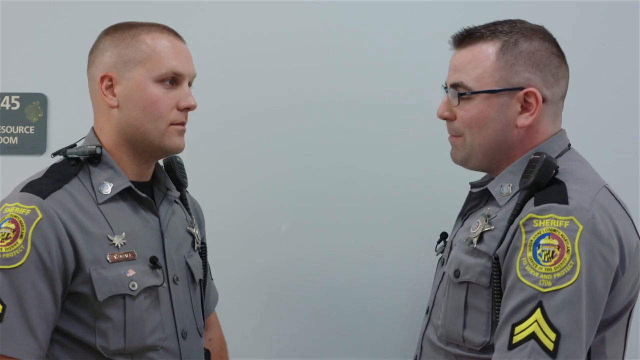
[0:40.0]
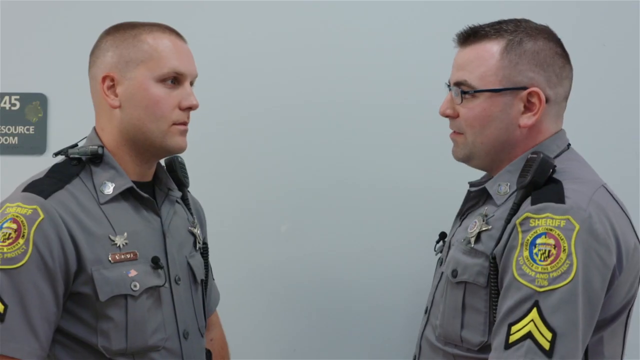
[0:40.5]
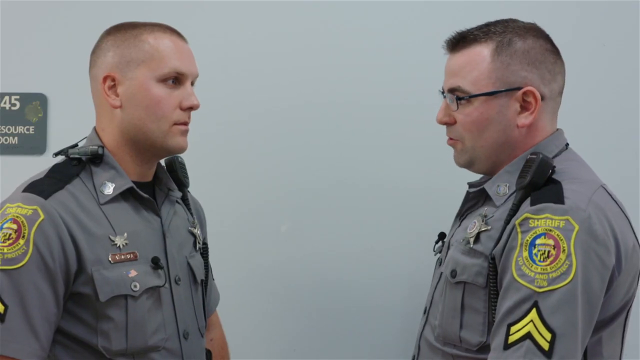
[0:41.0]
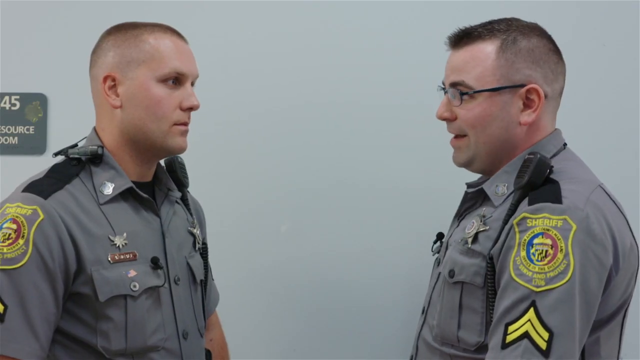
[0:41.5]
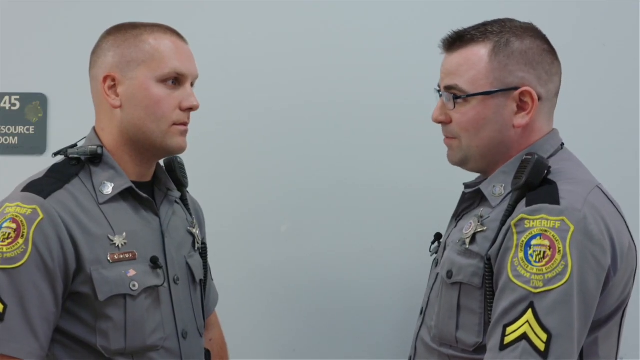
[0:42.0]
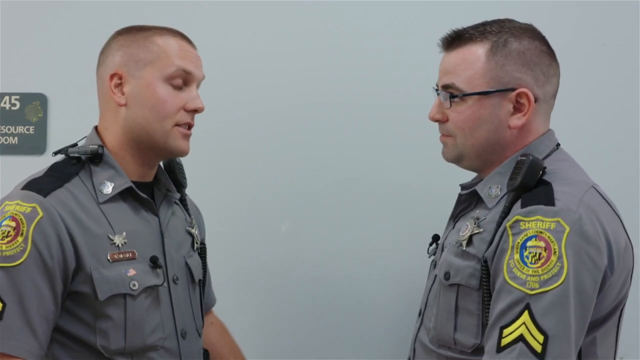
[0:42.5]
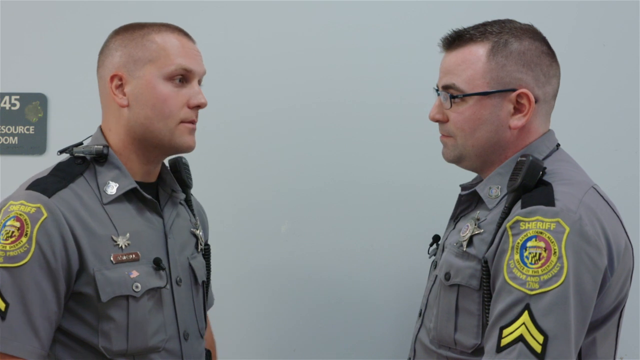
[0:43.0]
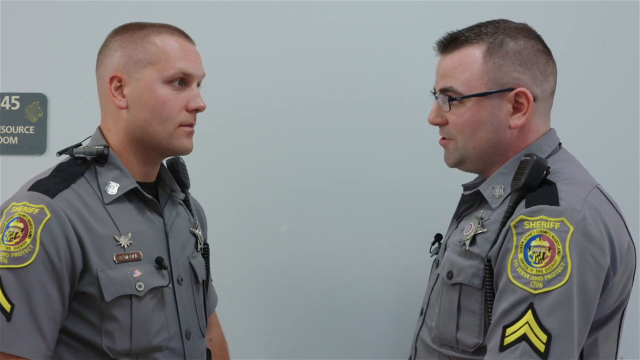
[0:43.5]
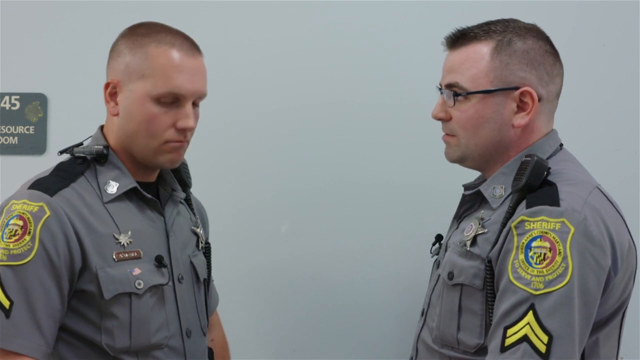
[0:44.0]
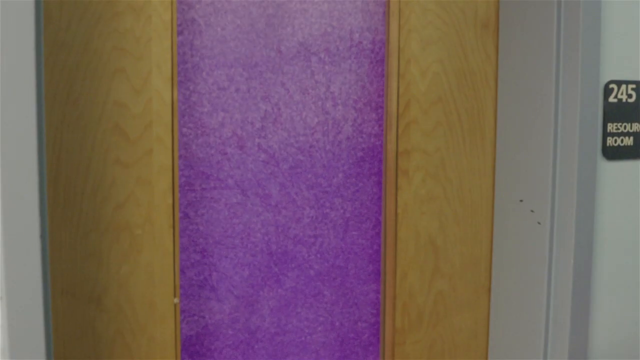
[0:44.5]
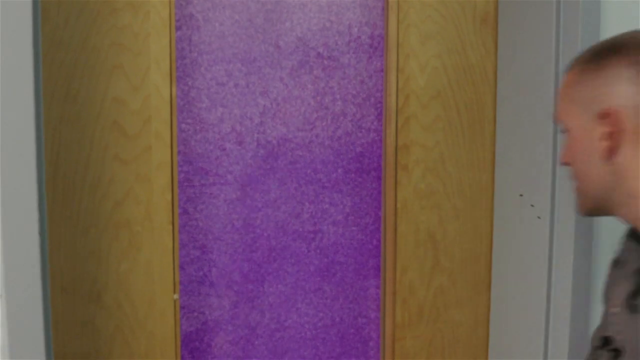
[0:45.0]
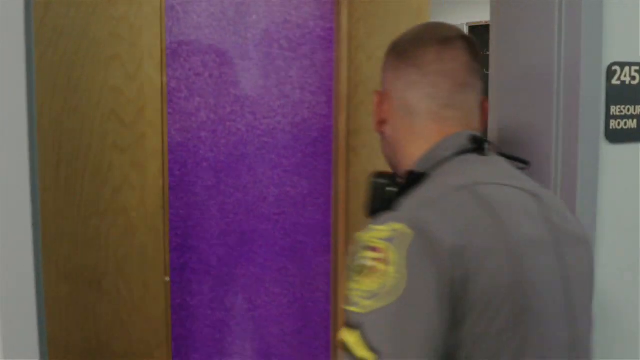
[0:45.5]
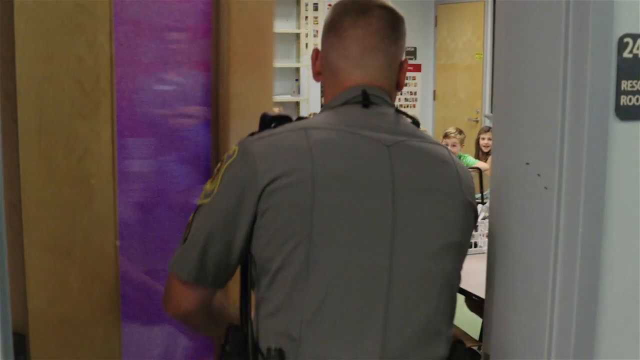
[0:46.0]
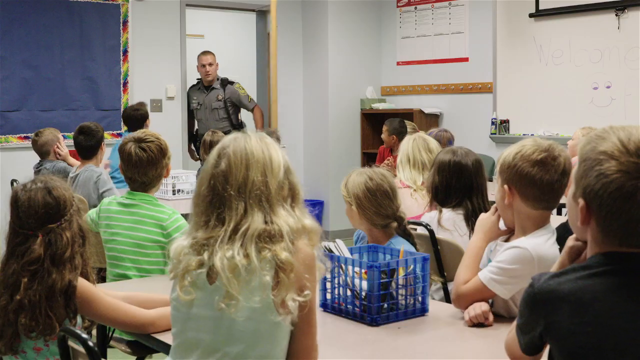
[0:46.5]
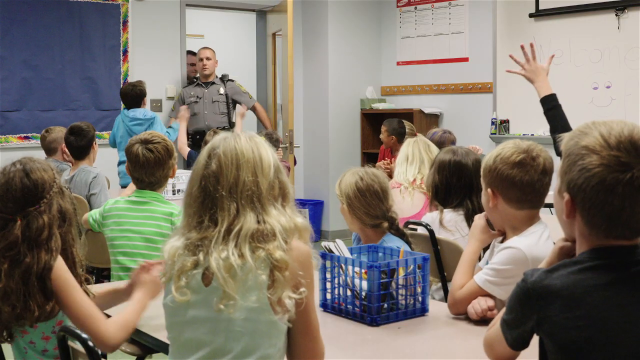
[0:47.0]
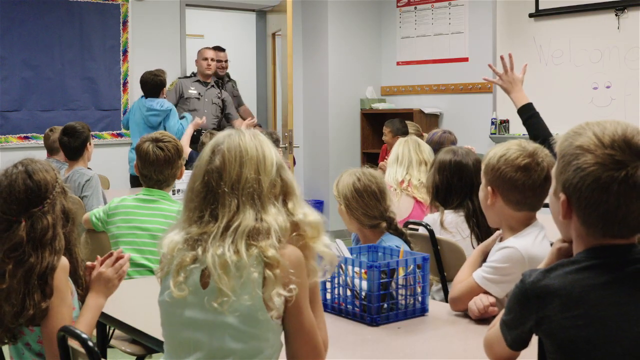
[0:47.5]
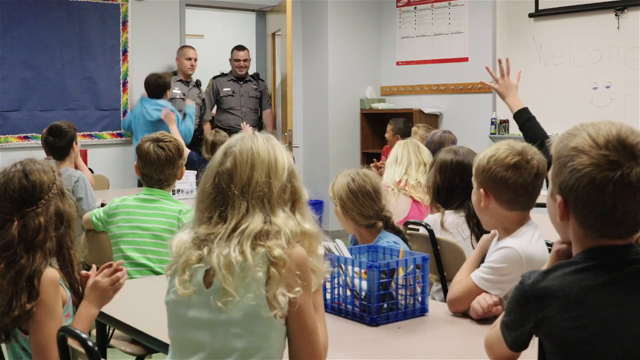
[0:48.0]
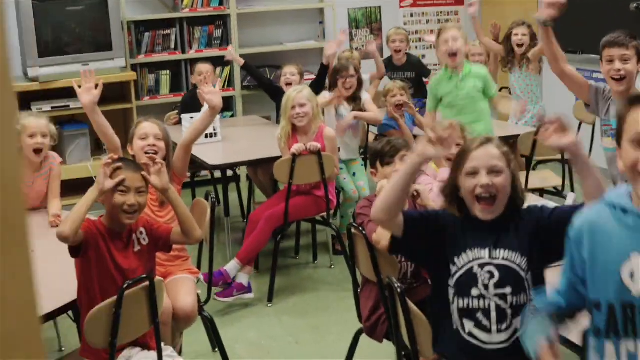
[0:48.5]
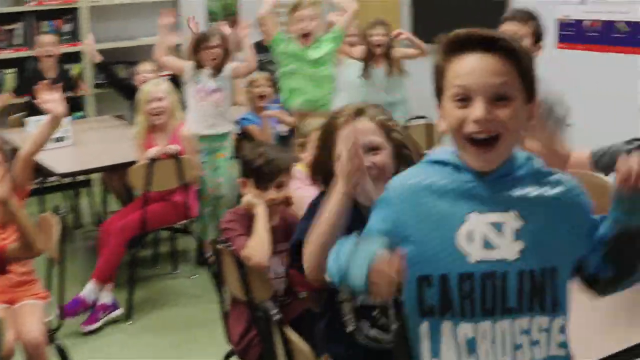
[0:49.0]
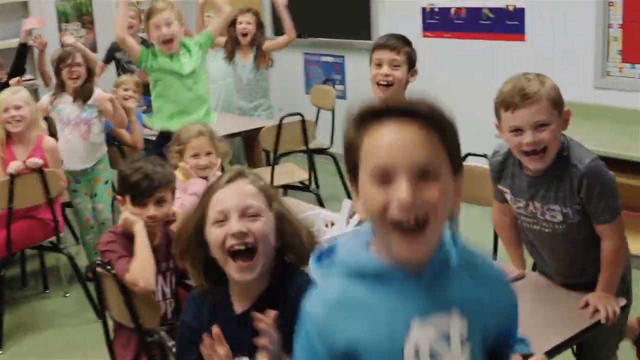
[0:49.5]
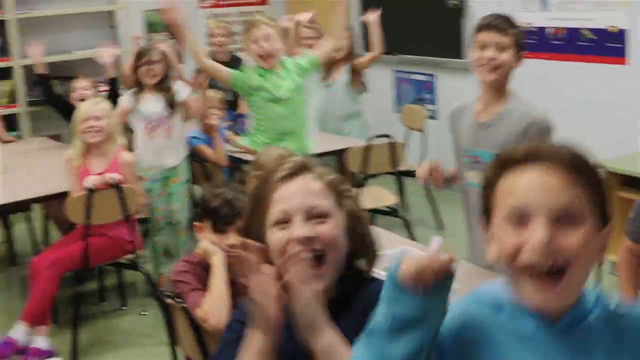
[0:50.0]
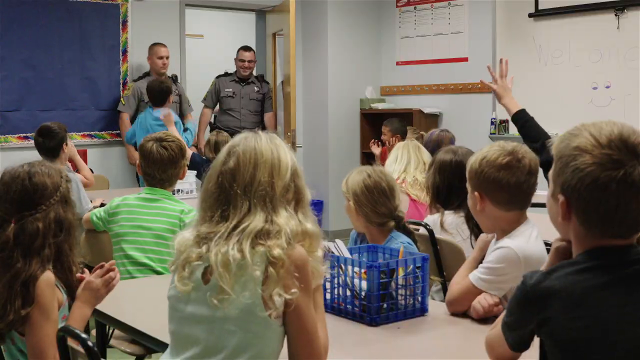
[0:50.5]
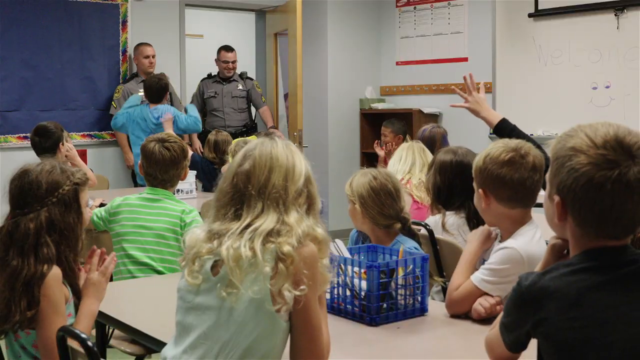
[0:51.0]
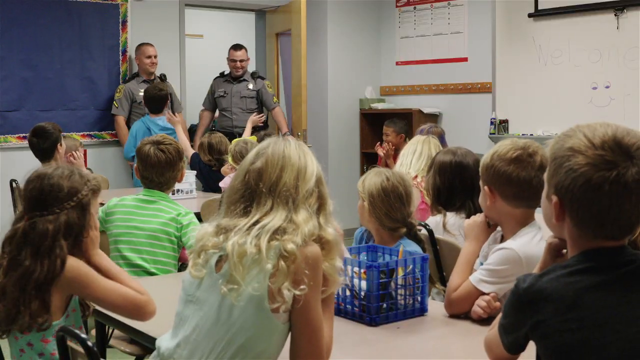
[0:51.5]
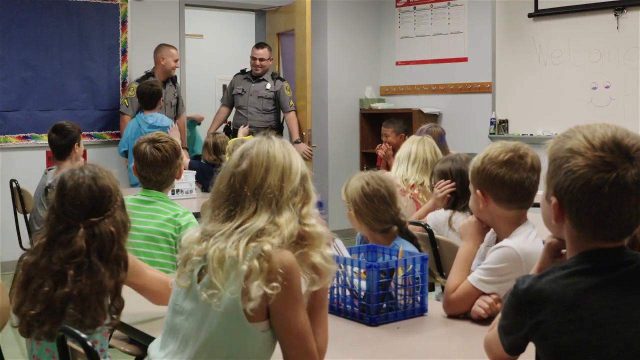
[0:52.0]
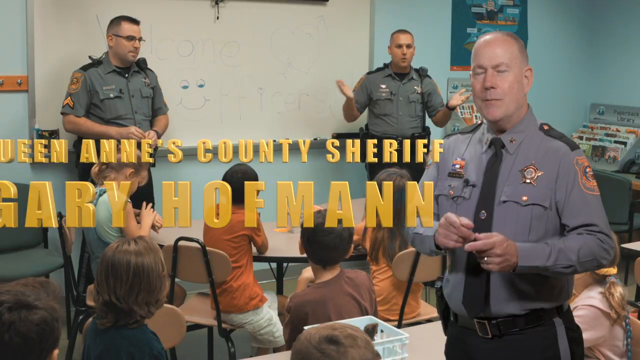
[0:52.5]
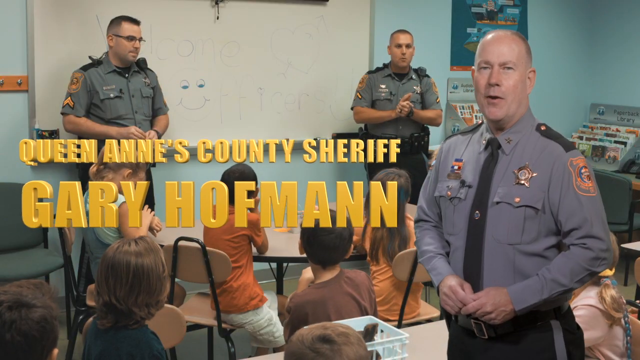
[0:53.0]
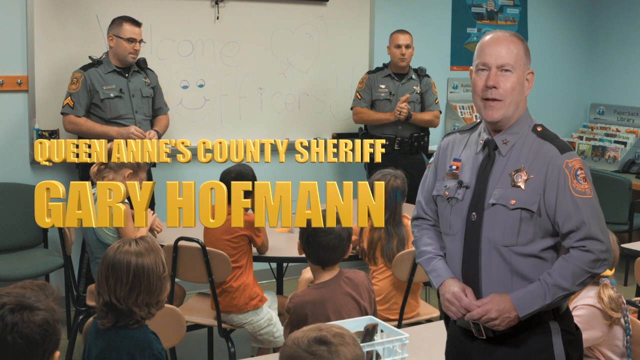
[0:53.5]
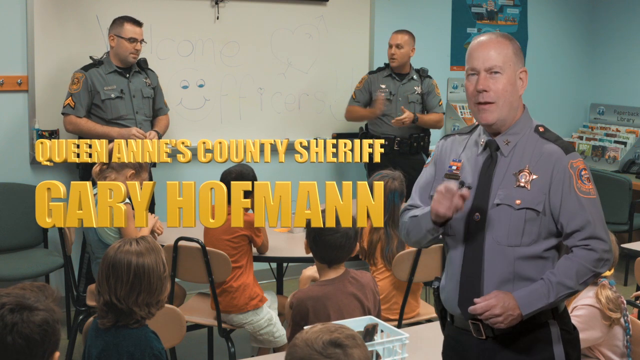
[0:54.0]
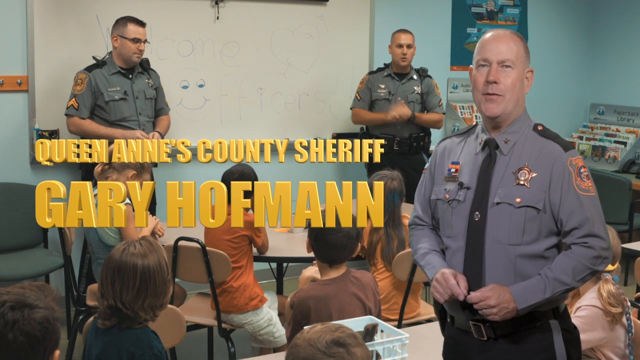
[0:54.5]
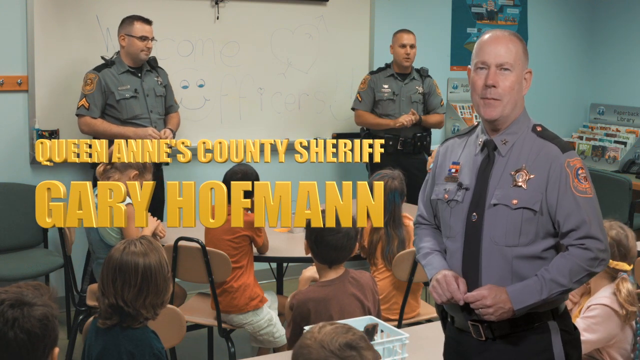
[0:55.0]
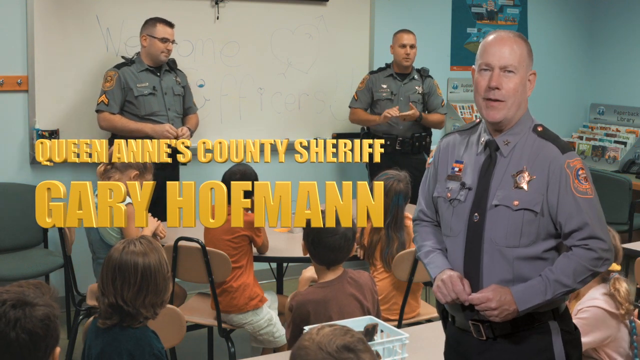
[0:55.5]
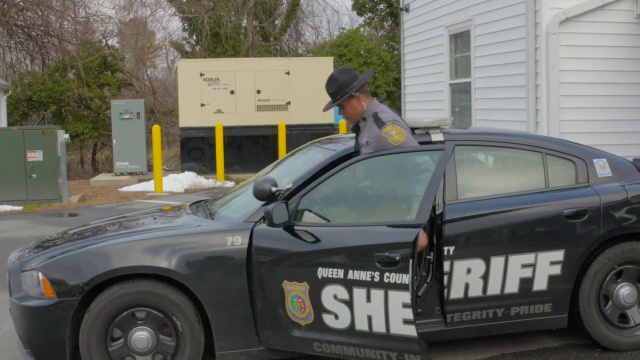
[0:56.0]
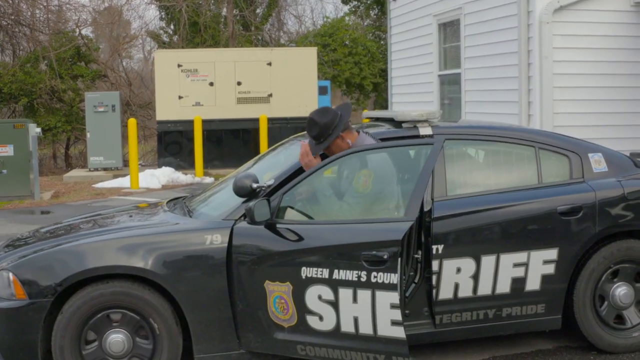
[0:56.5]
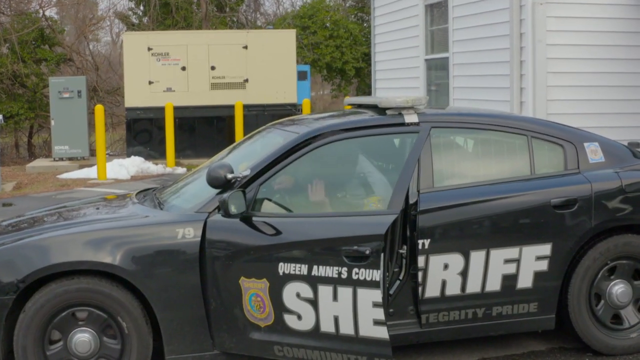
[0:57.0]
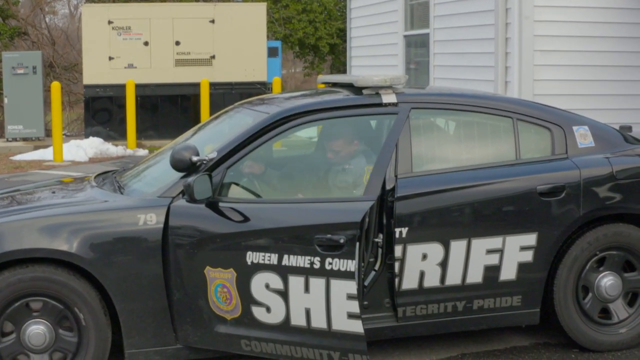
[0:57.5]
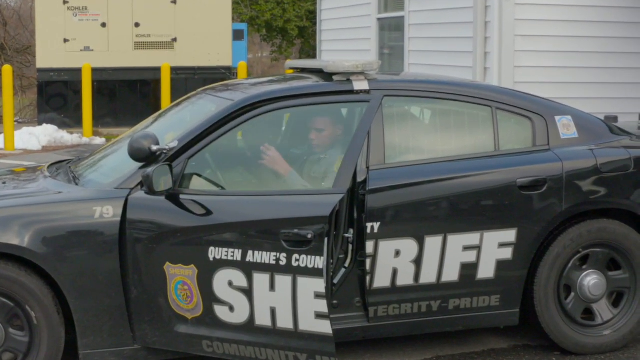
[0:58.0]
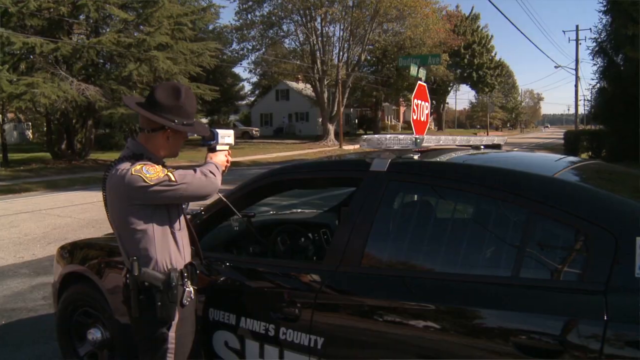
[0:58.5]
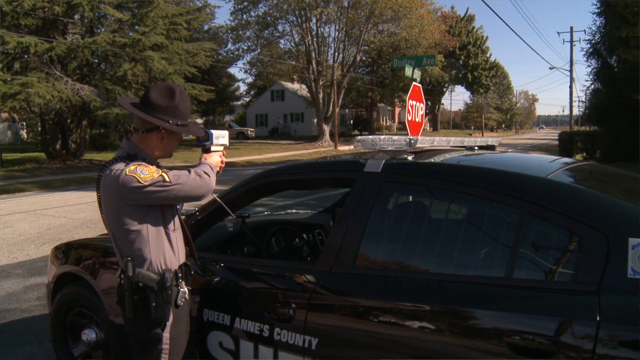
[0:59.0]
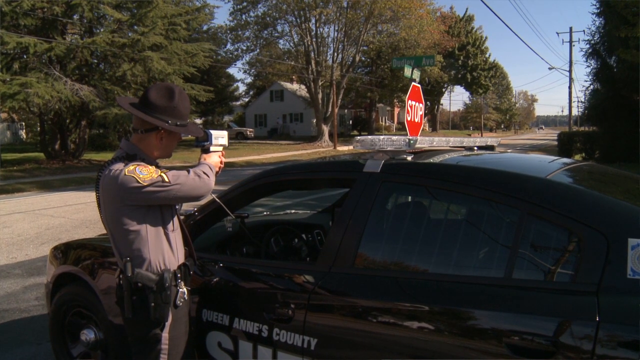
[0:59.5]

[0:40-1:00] The two police officers, both with short brown hair, are in the same room. The one with glasses is kind of leading and talking to the other officer, who is on the right and a bit larger in stature. A door with purple glass in a horizontal panel is shown. The door opens onto a room of young children who are kind of jumping happily and greeting the police officers; there are at least a full room of kids, probably around 15-20 if not more. Yellow text appears on the screen alongside a third, older police officer in the same sort of grey t-shirt, reading "Queen Anne's County Sheriff Gary Huffman". The scene then transitions to a close-up of a car, with a sheriff waiting to catch people speeding.